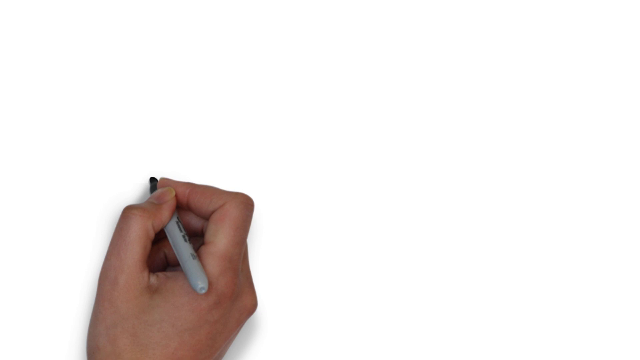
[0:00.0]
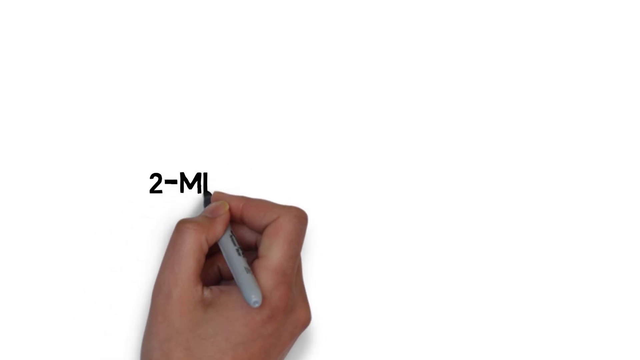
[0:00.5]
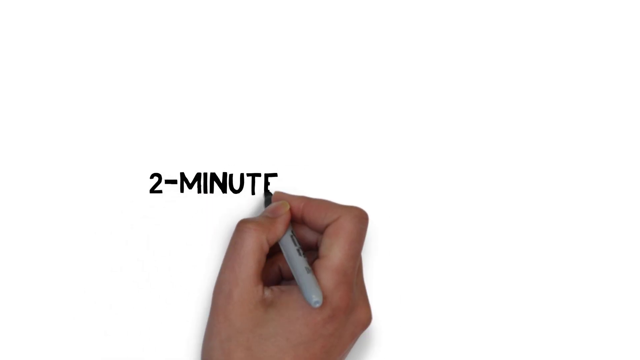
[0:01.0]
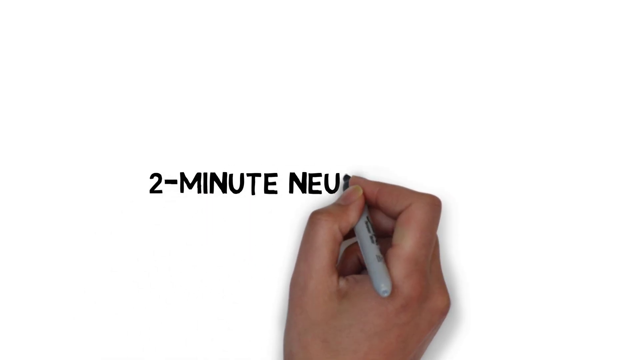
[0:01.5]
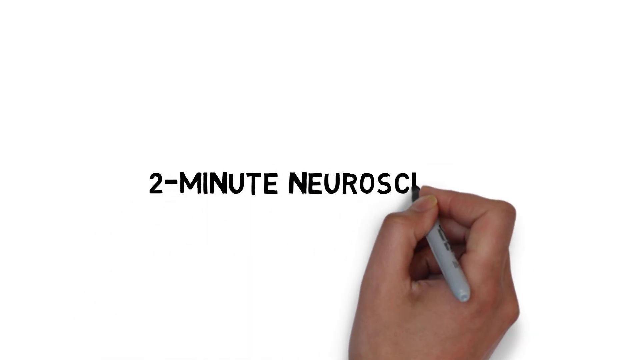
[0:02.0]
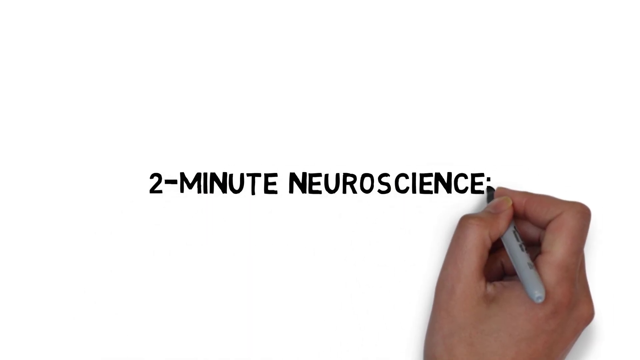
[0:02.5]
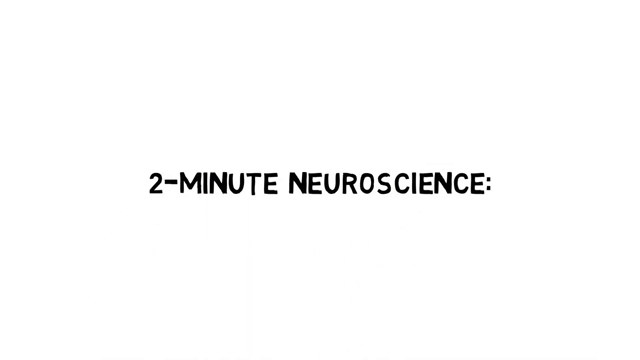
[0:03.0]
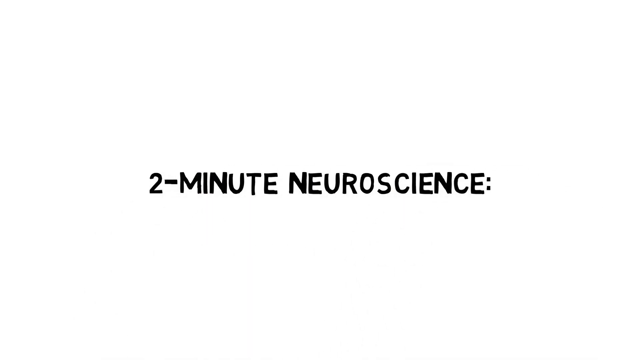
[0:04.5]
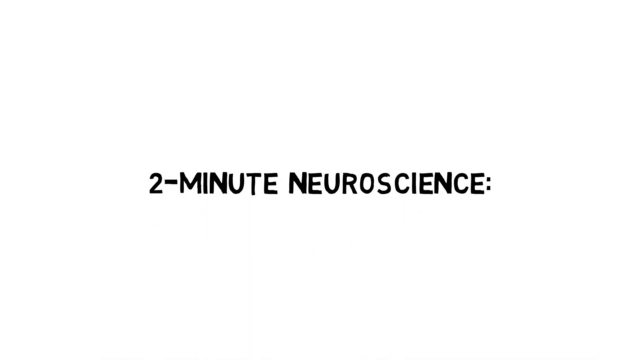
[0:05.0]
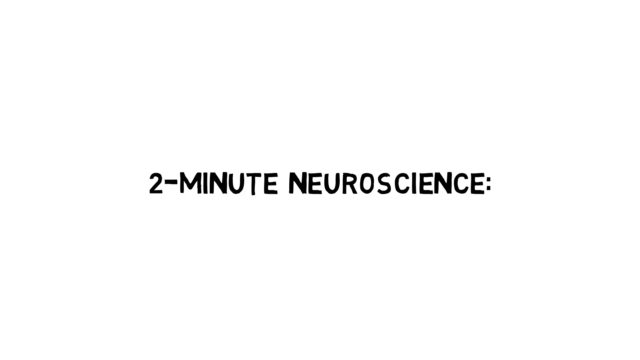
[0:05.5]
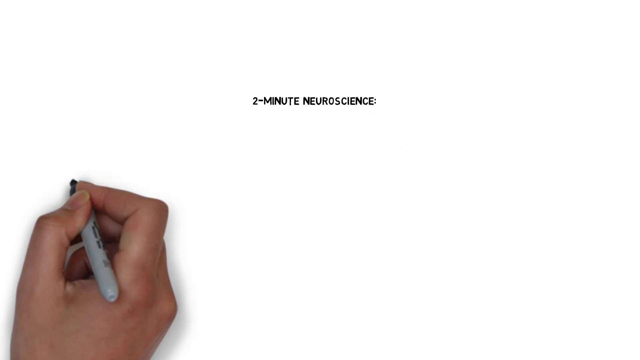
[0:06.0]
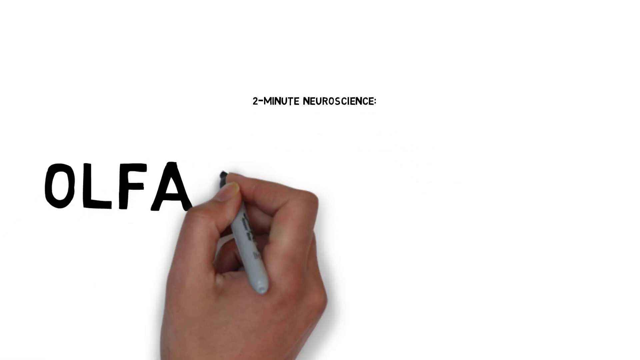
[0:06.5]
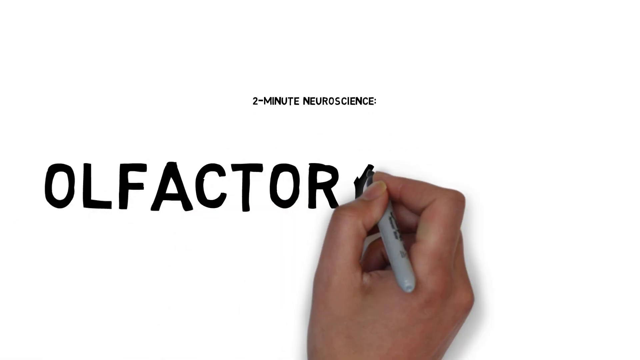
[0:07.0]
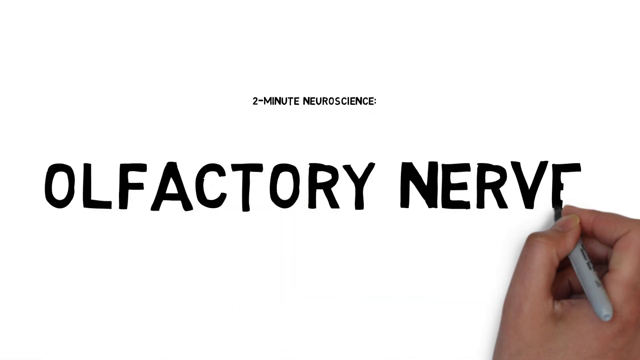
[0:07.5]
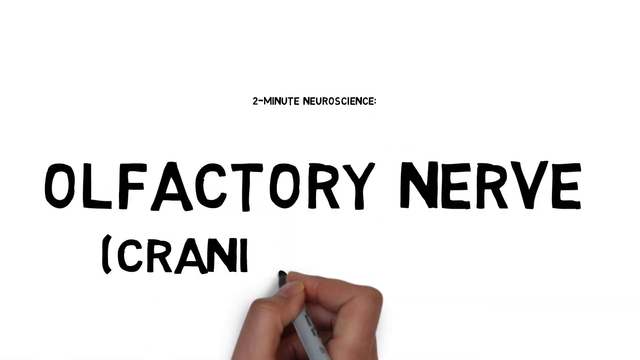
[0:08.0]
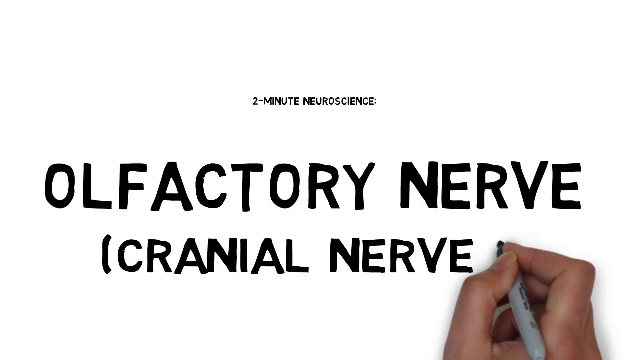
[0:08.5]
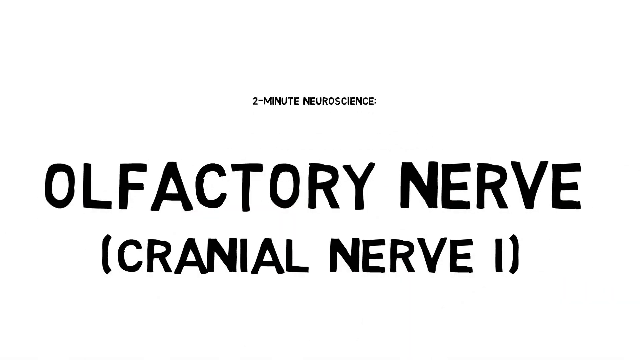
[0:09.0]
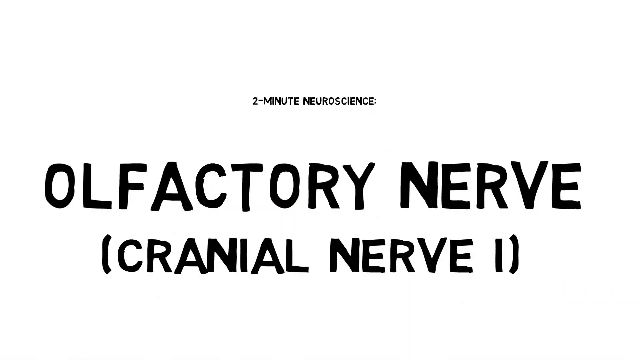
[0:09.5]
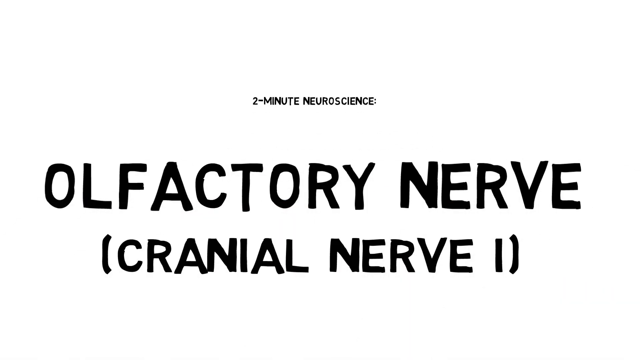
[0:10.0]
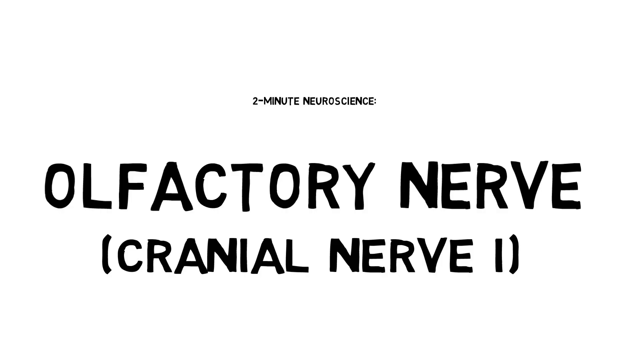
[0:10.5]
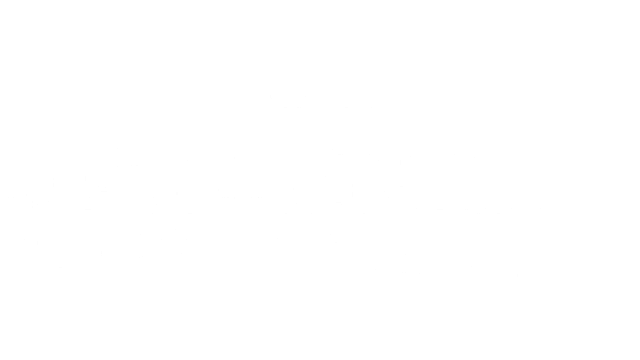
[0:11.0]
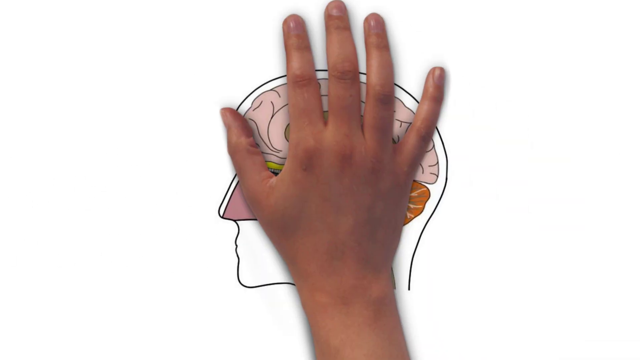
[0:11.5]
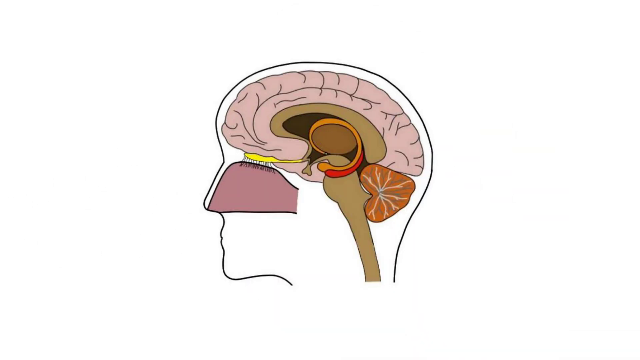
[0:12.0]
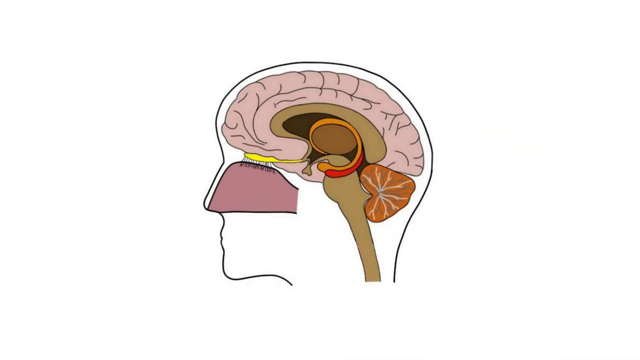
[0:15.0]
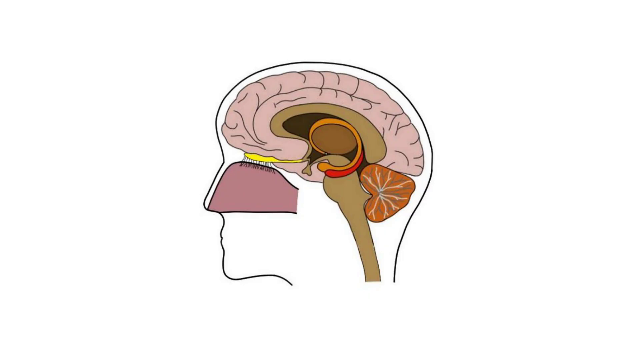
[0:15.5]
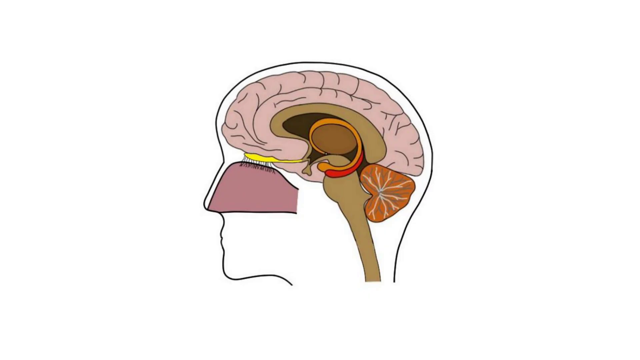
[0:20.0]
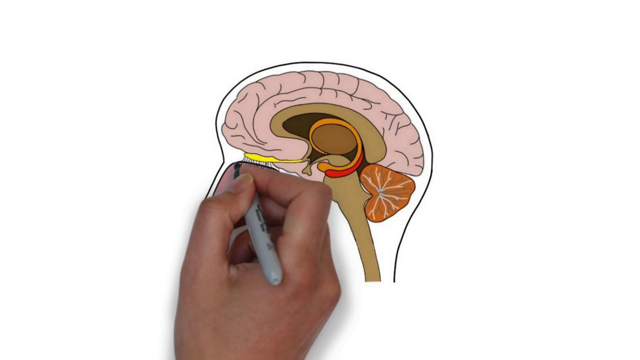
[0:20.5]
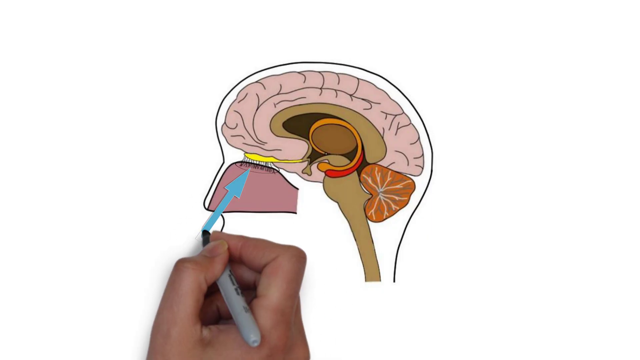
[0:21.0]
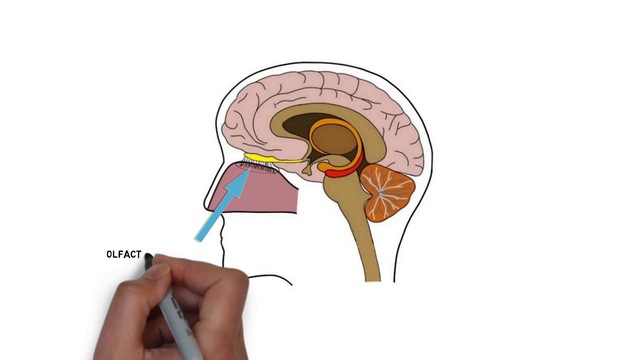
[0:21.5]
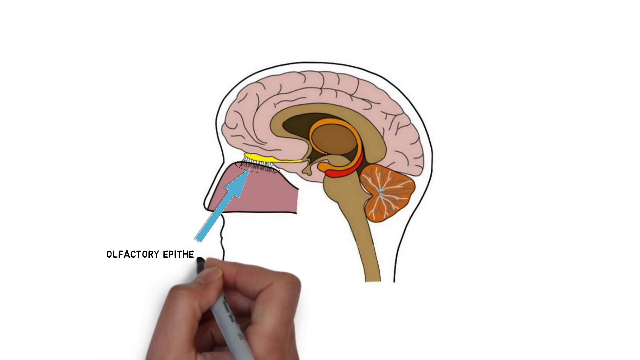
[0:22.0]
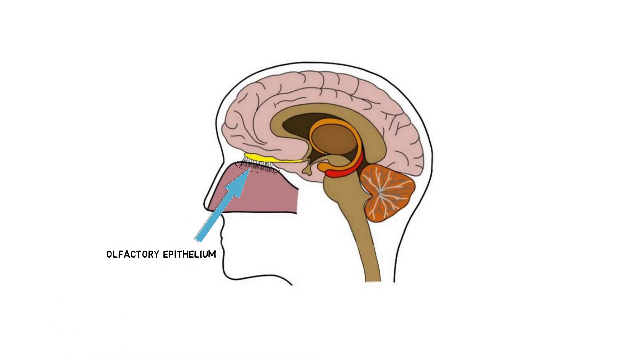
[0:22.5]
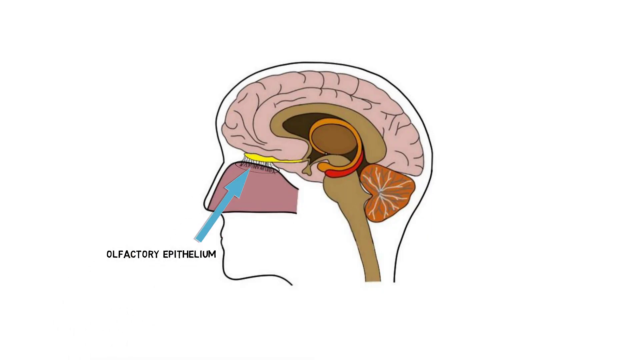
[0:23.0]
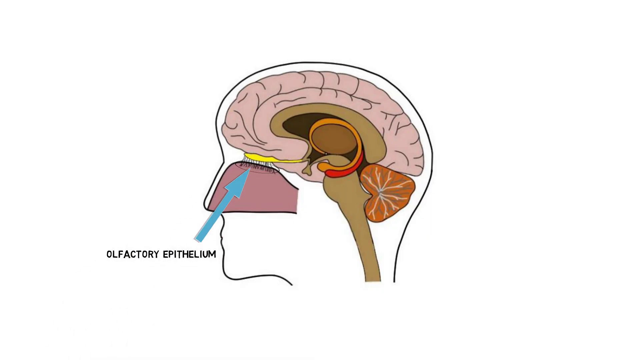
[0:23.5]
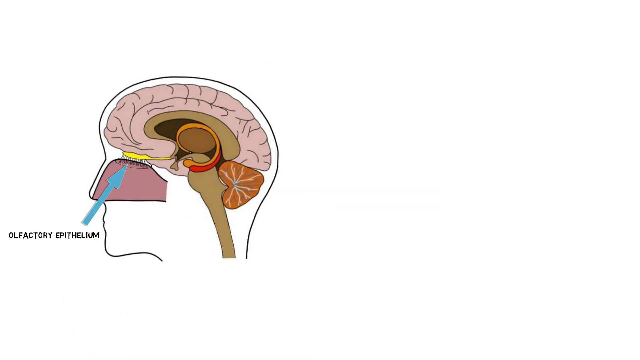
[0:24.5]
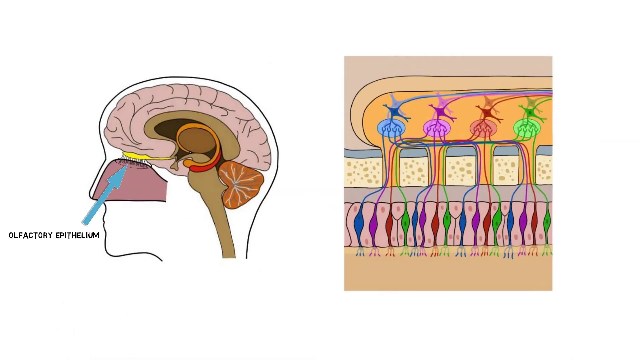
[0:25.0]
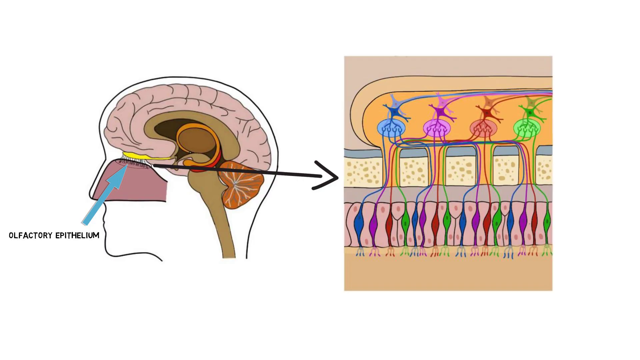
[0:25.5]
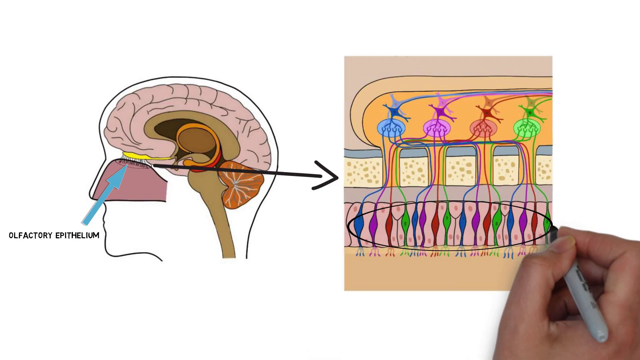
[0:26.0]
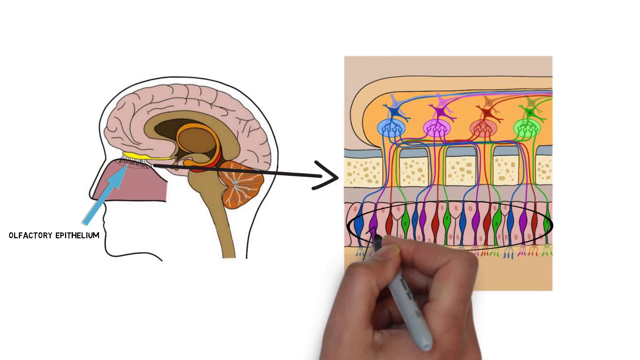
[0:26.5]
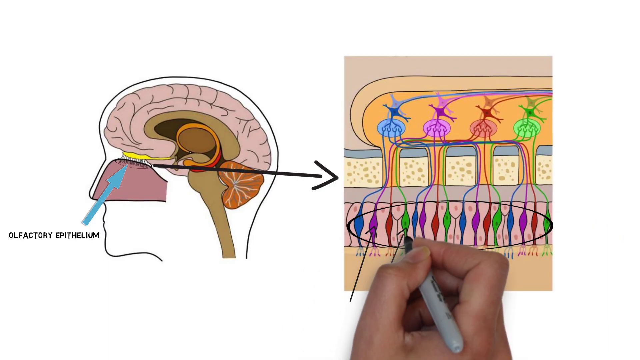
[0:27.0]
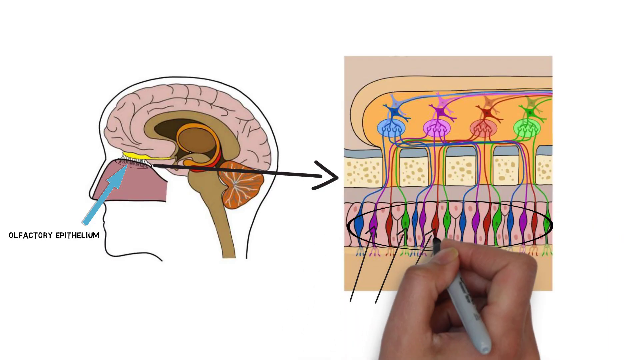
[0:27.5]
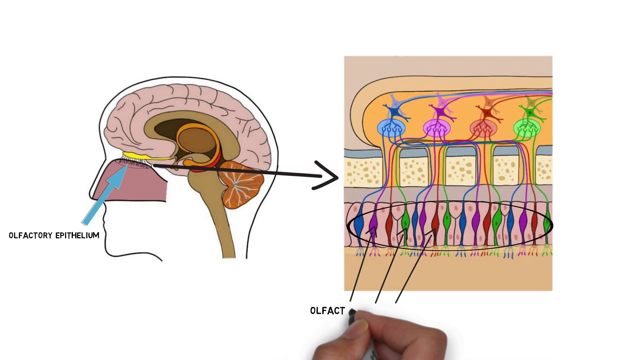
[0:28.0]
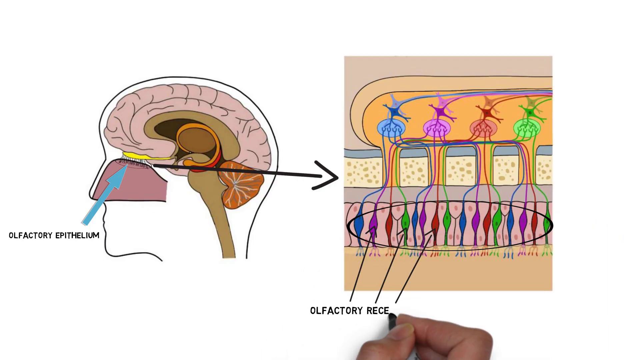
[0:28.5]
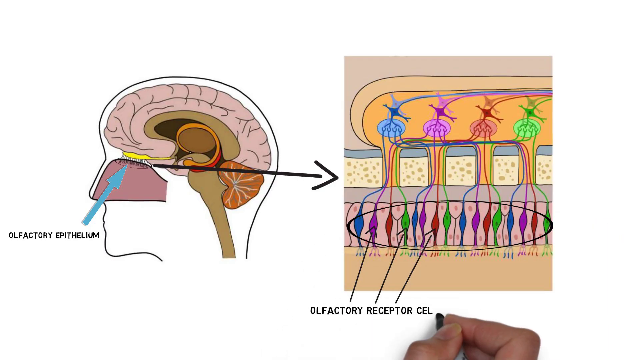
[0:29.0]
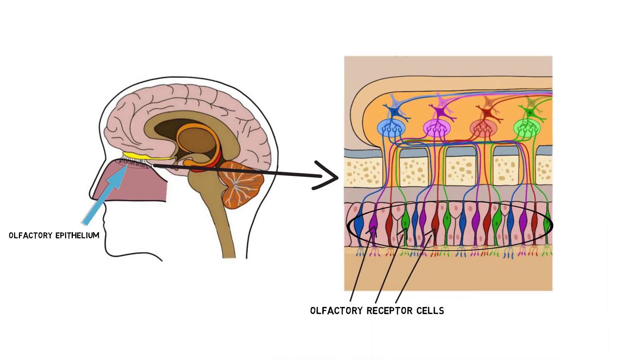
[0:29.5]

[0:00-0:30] A hand writes "two minute neuroscience" and "olfactory nerve cranial nerve 1" on a board. A drawing of a brain and the side of a head appears, and an arrow points from it to a label reading "olfactory epithelium". The view then moves in for a closer look at the cells within the olfactory epithelium: the person drawing circles it, and a closer picture follows in which he labels the olfactory receptor cells.